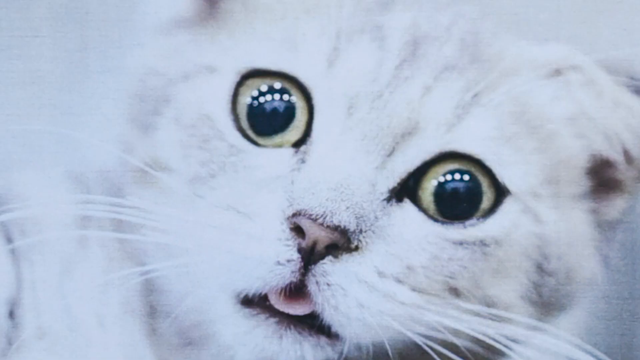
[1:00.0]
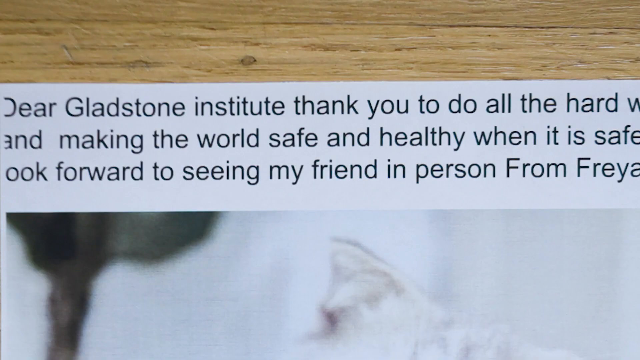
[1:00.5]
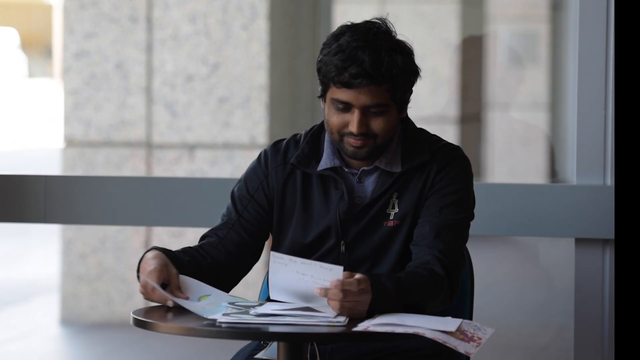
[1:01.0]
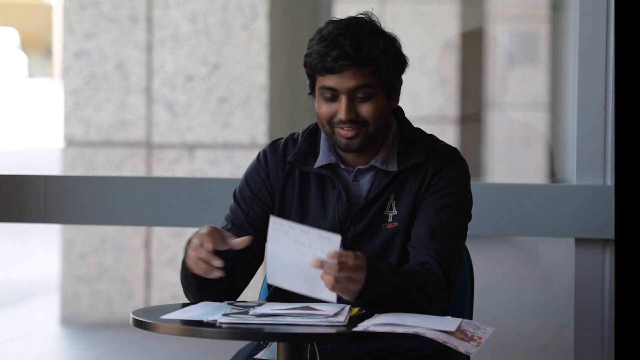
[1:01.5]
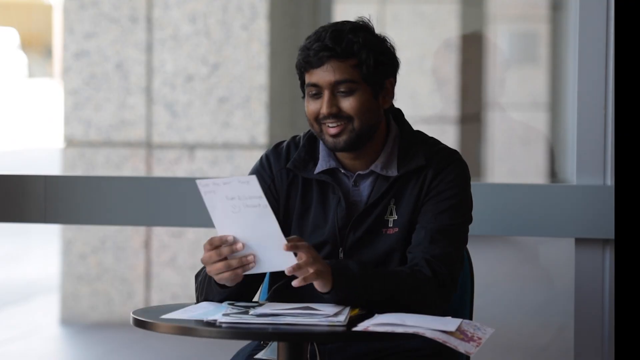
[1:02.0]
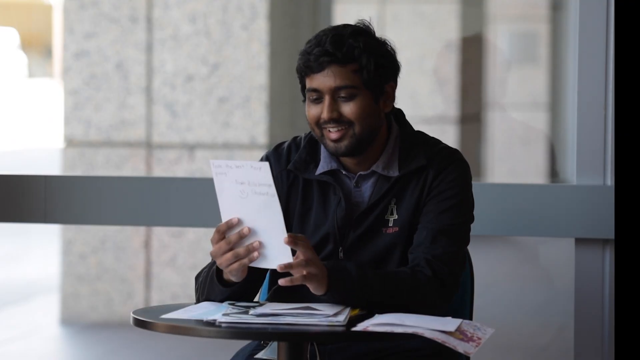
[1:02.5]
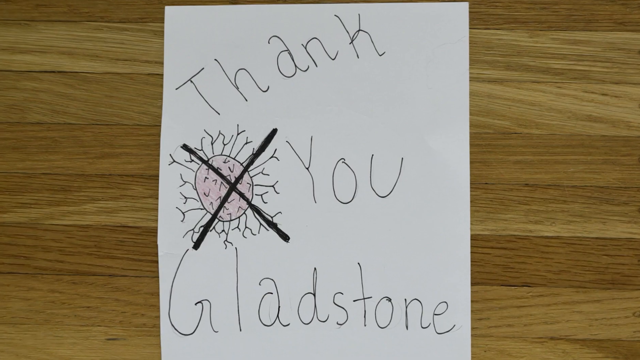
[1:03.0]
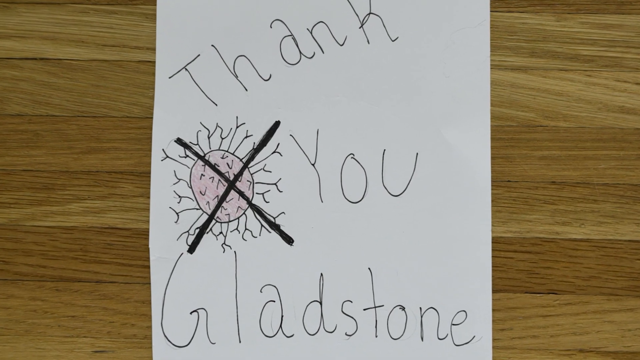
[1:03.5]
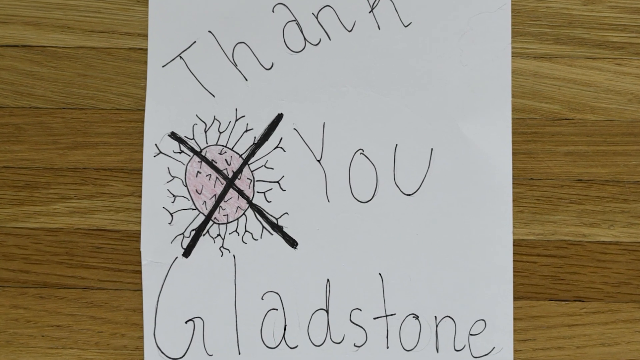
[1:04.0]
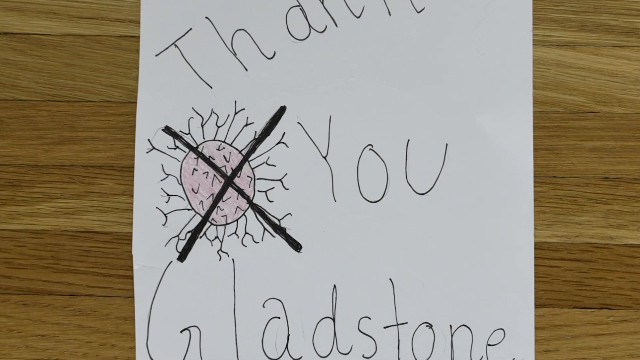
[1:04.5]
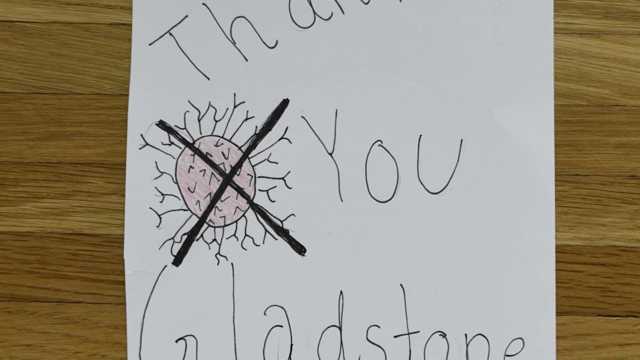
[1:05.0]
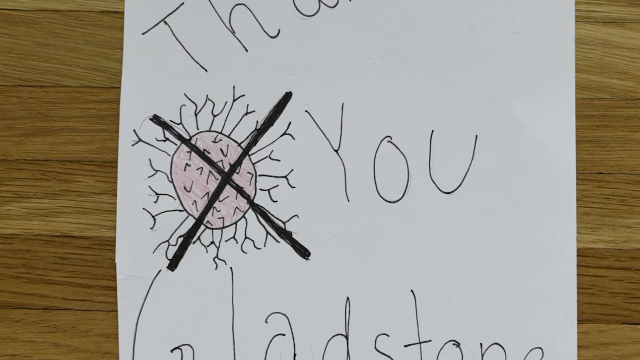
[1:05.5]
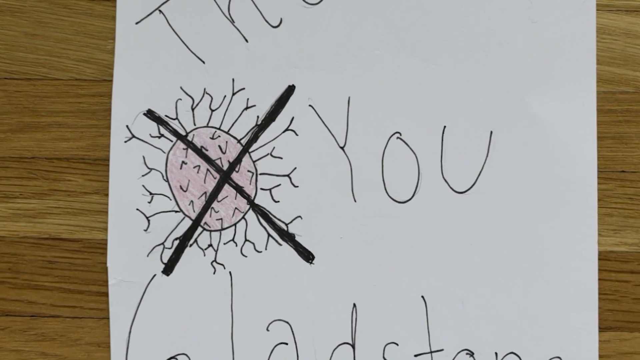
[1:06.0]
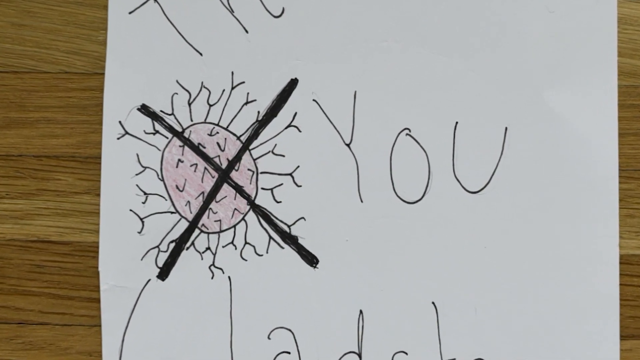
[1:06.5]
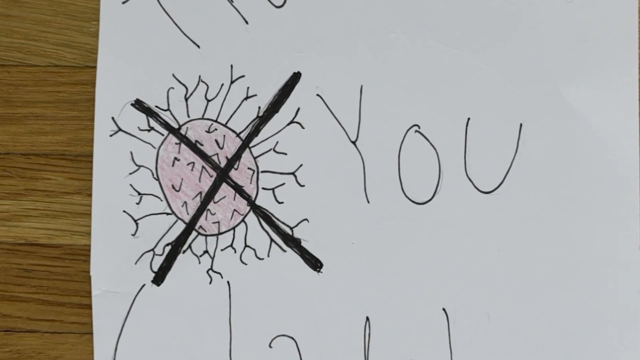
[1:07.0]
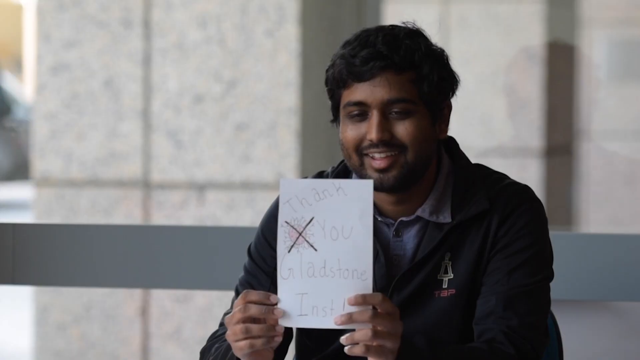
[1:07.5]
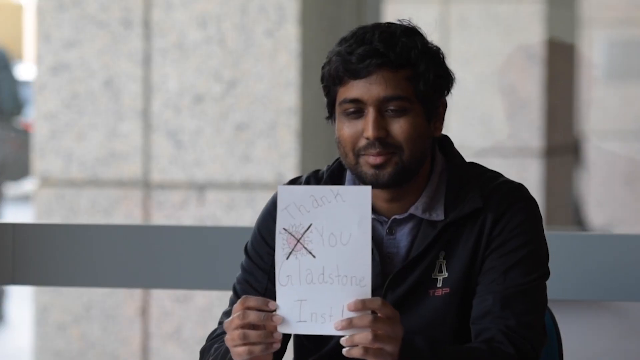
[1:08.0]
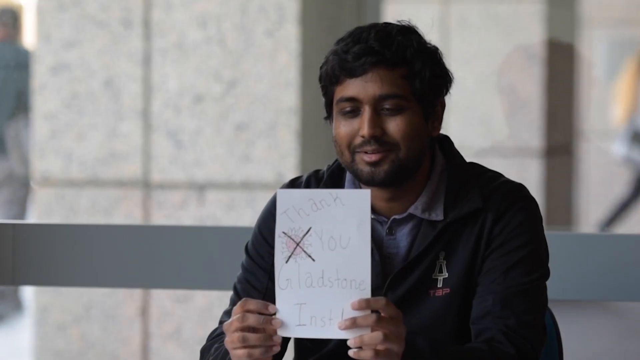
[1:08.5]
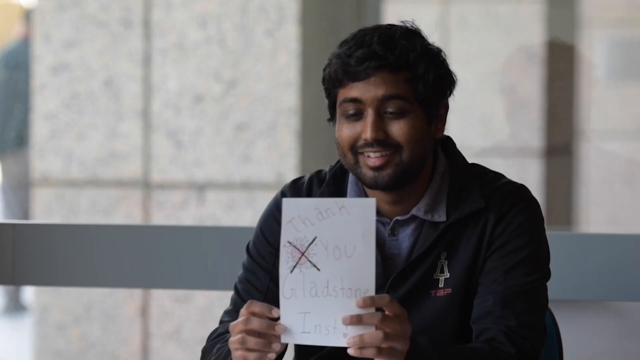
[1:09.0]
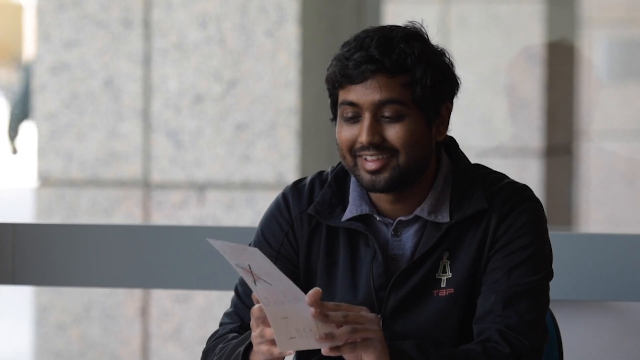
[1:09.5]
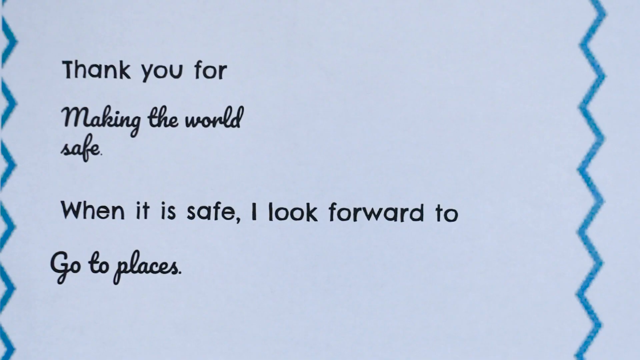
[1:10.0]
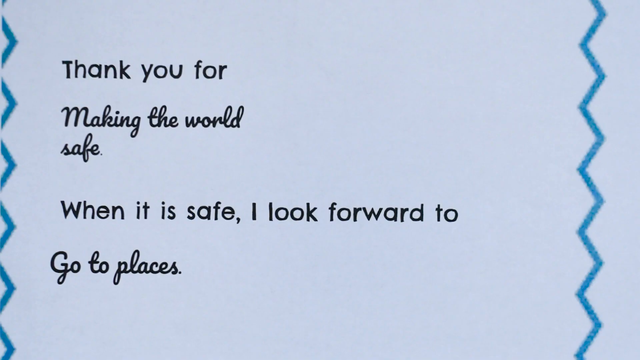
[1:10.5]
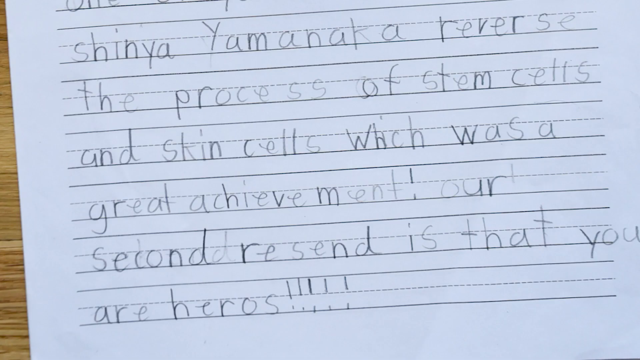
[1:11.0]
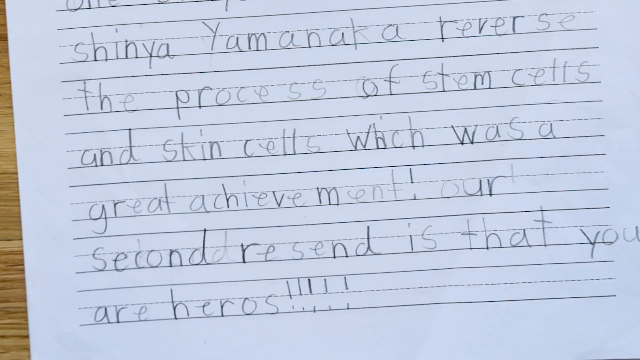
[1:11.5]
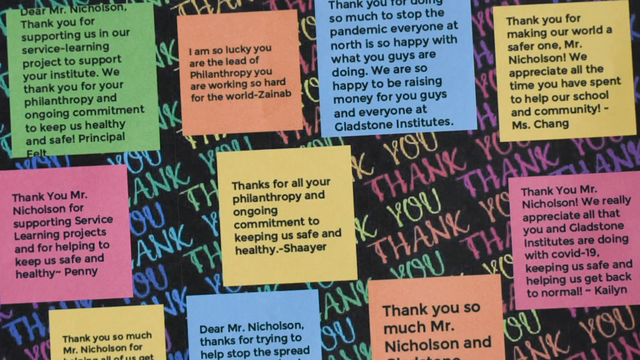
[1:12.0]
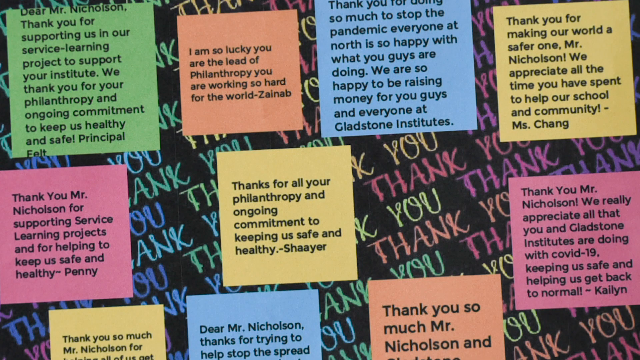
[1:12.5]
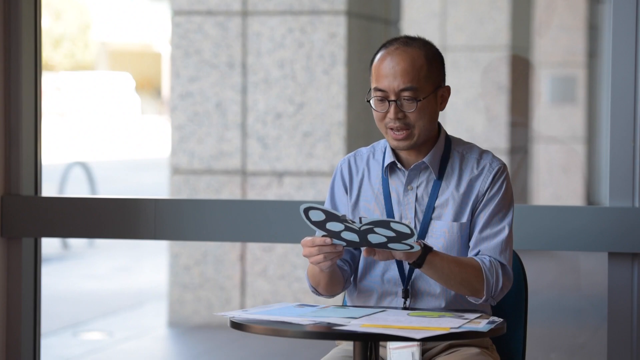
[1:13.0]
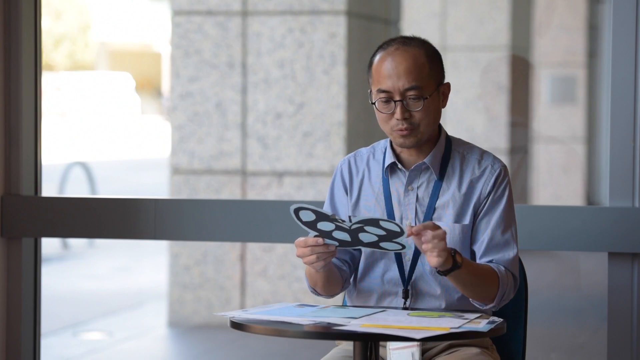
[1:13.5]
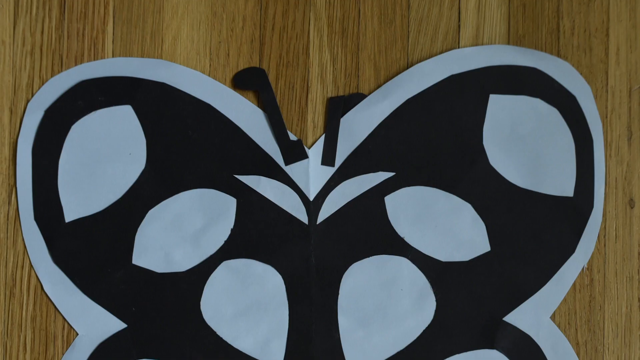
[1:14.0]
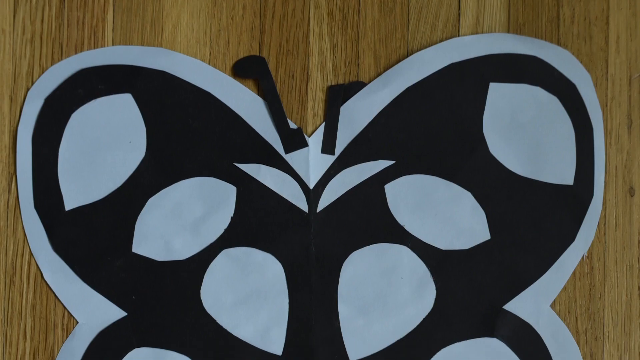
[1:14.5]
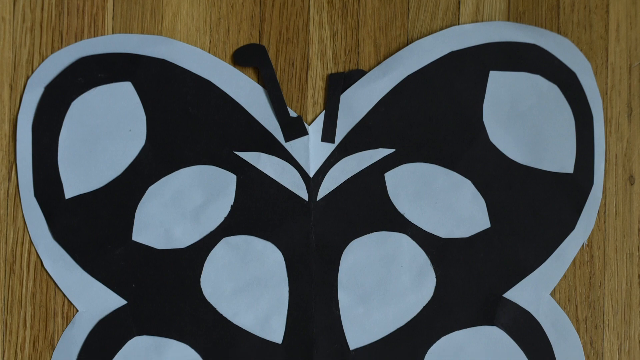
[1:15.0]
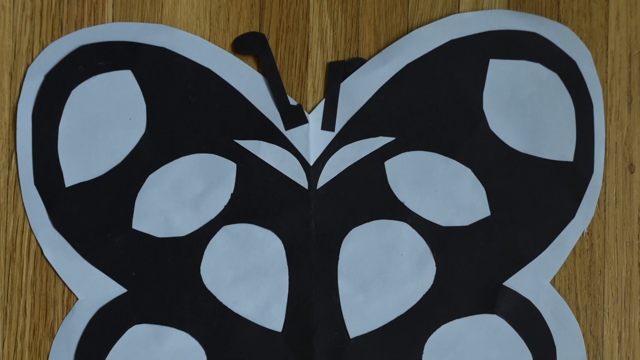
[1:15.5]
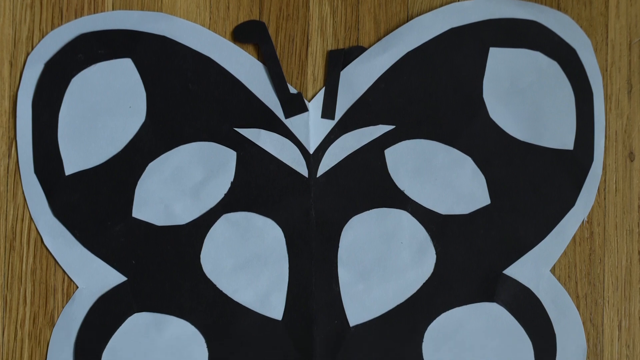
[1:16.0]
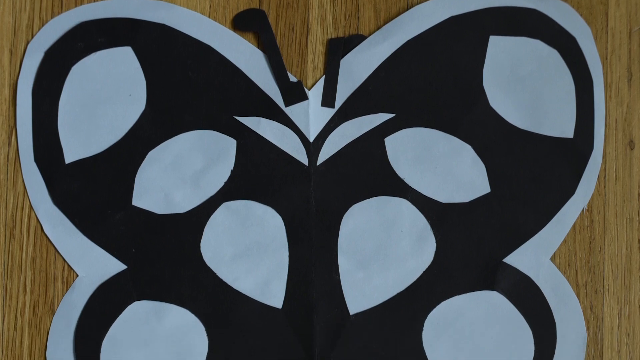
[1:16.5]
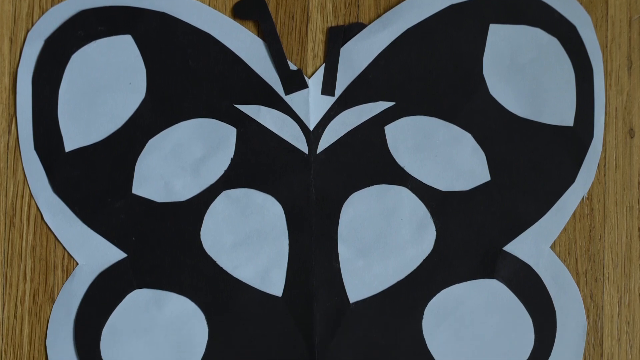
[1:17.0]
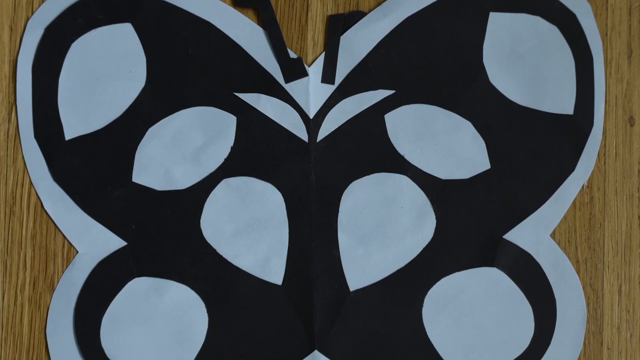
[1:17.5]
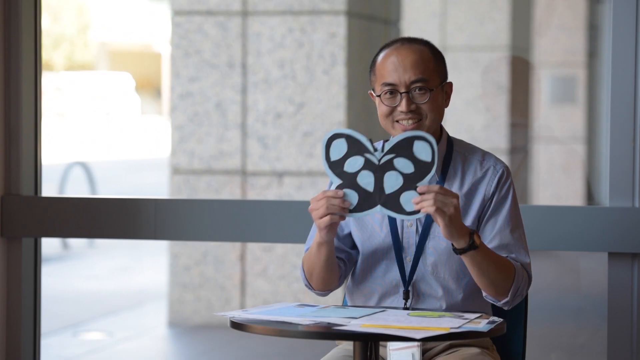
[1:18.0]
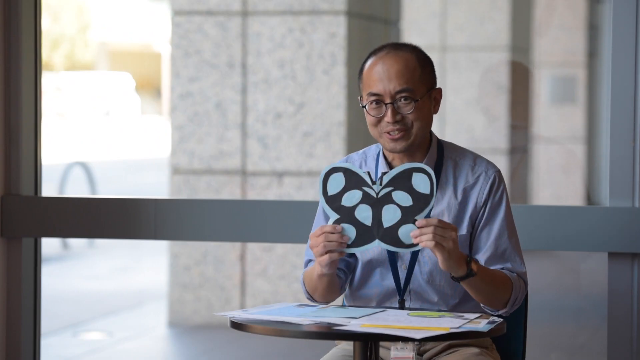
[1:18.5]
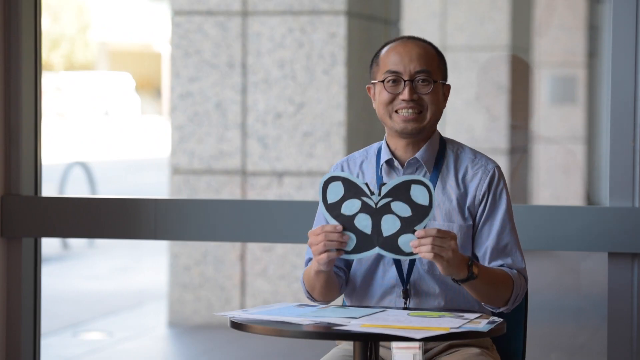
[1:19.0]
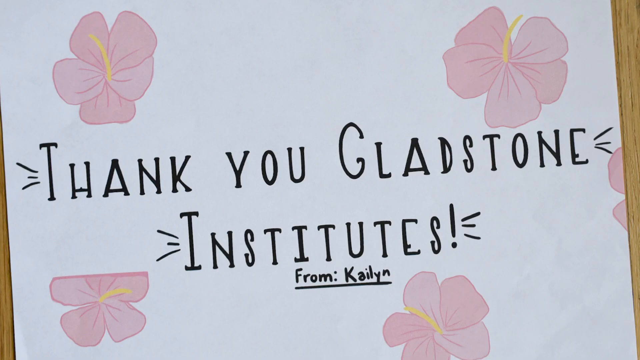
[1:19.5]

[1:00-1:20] A white piece of paper shows an image of a white cat with a surprised expression. The view switches to words written in black print at the top of the page, shown for about half a second. Next, an Indian man is seated in front of a large, clear commercial-grade window. He wears a jacket and holds a rectangular white piece of paper in his hands, looking down at it and smiling. He starts talking, and the view cuts to the paper, which says "thank you Gladstone" and looks like it was written by a child. The camera zooms in on it, then returns to the man, now holding the paper upright in a tighter shot, showing it is the same paper. He keeps moving his lips, talking, and raising his eyebrows, and somewhat moves the paper around.